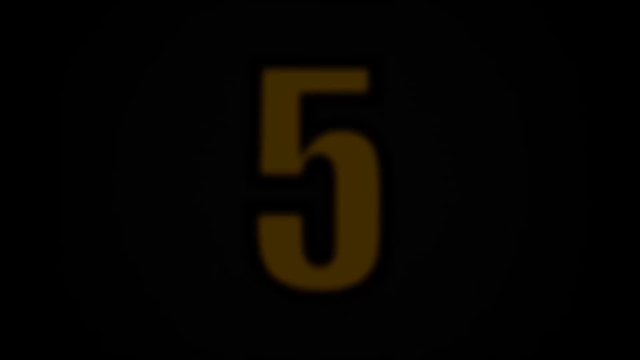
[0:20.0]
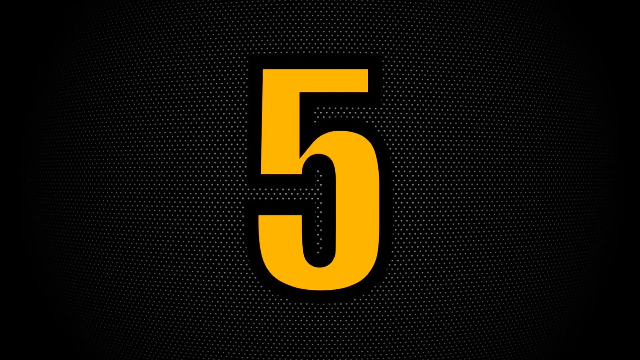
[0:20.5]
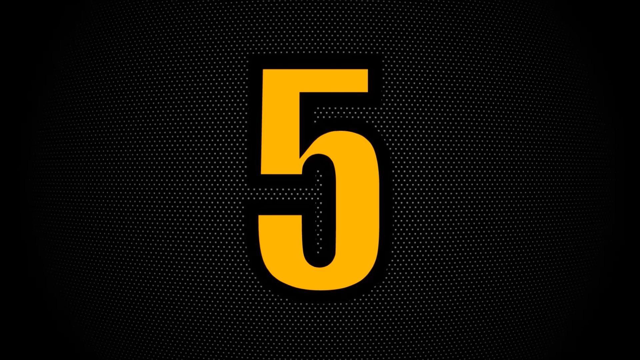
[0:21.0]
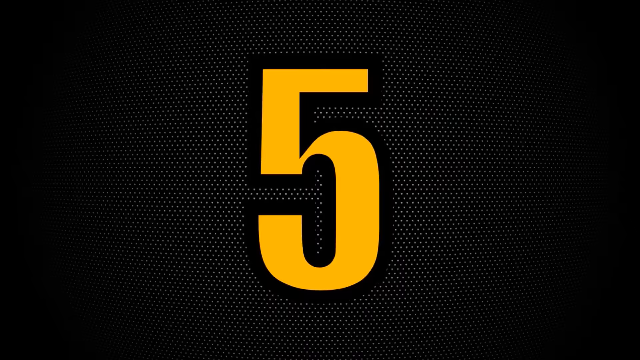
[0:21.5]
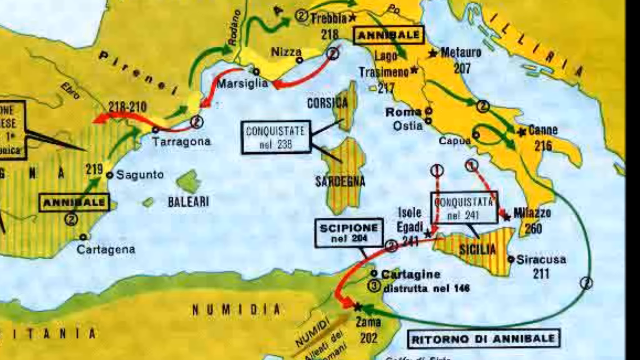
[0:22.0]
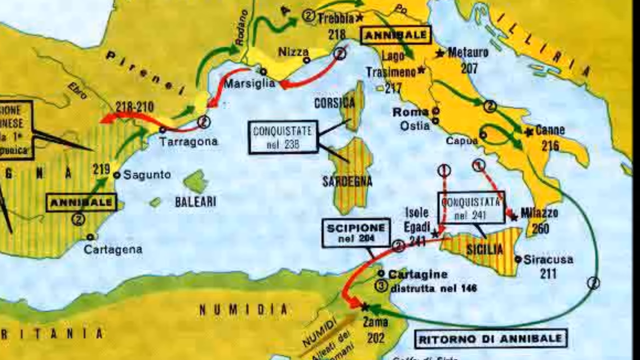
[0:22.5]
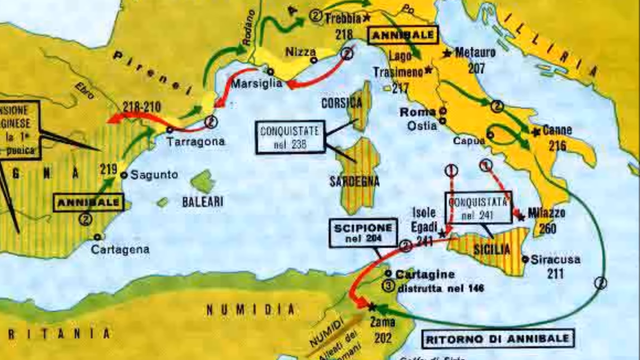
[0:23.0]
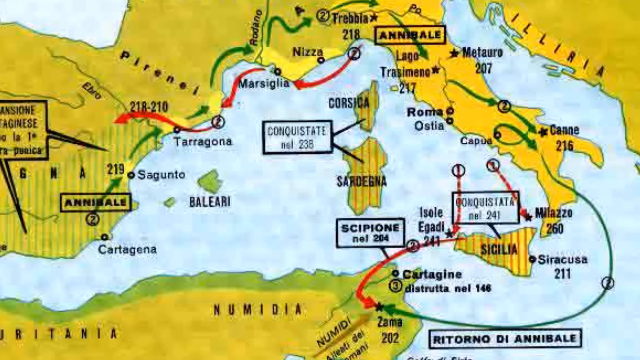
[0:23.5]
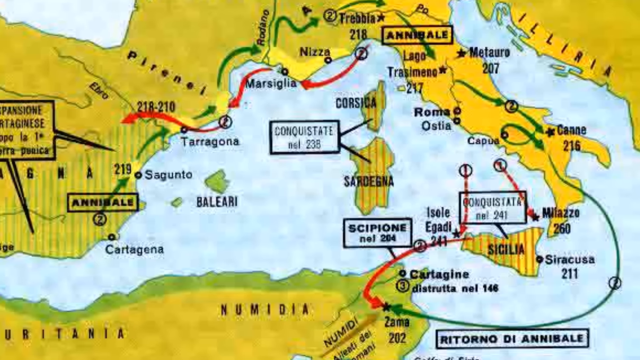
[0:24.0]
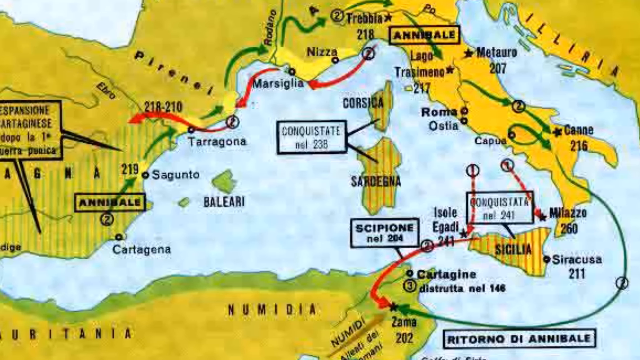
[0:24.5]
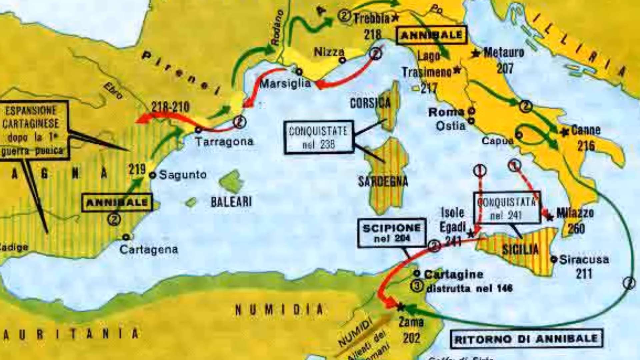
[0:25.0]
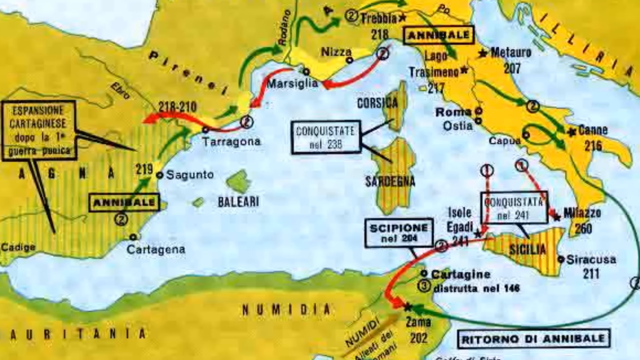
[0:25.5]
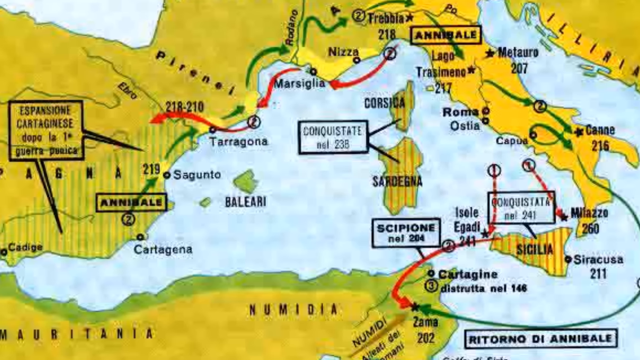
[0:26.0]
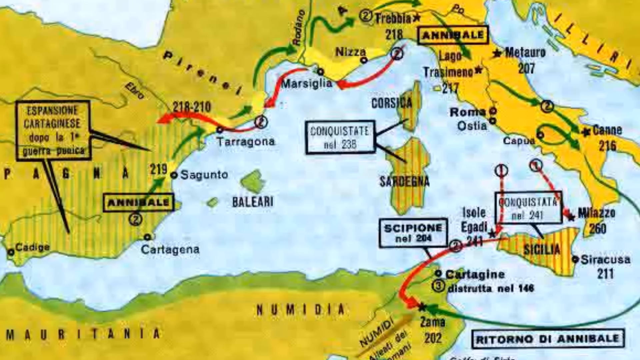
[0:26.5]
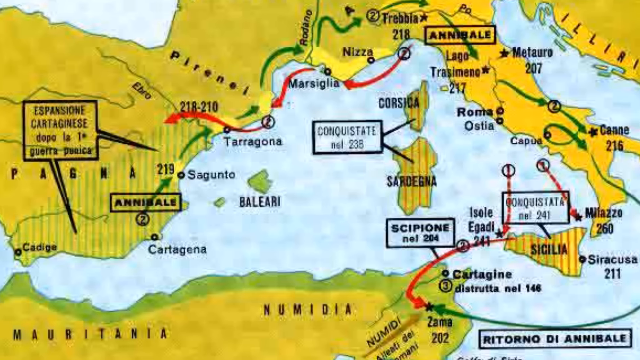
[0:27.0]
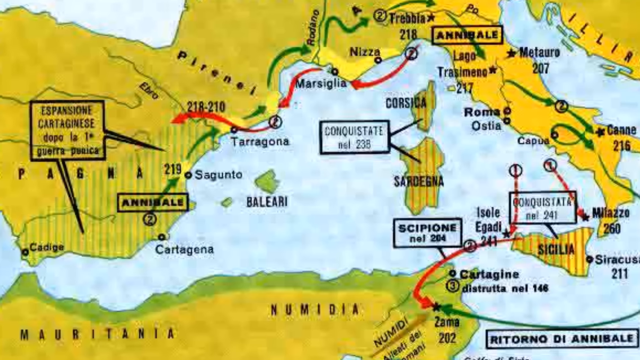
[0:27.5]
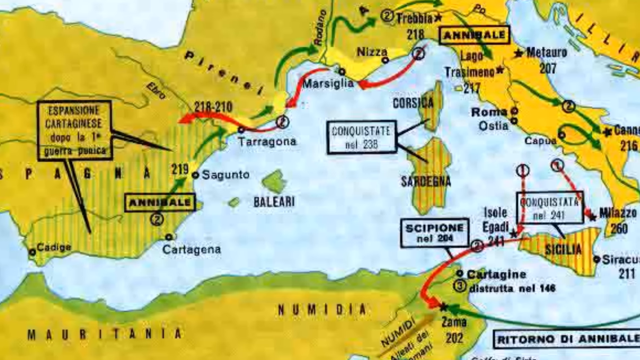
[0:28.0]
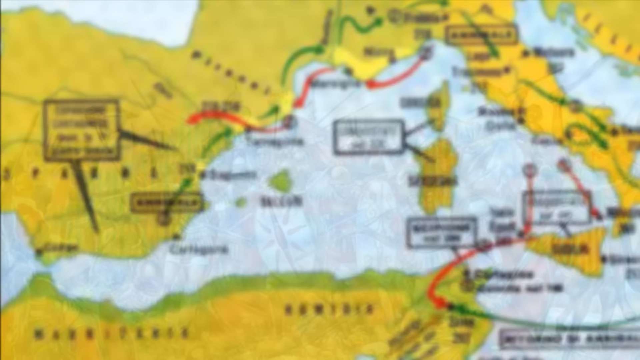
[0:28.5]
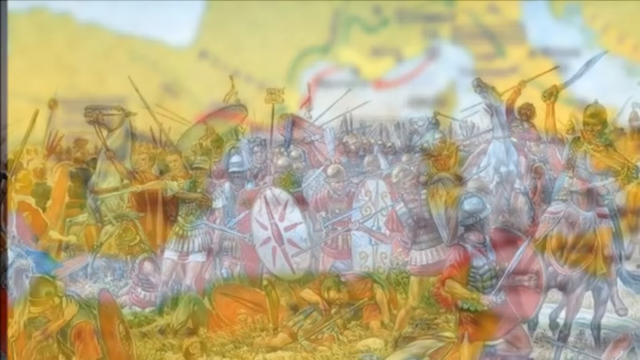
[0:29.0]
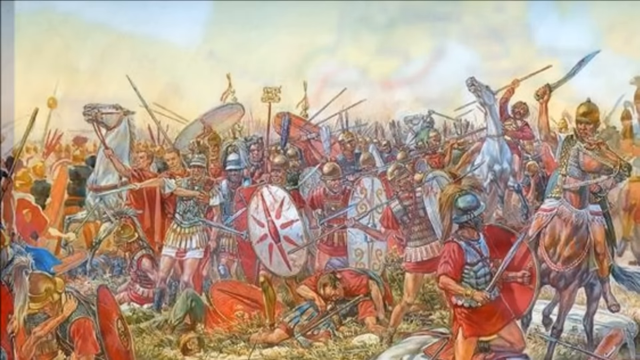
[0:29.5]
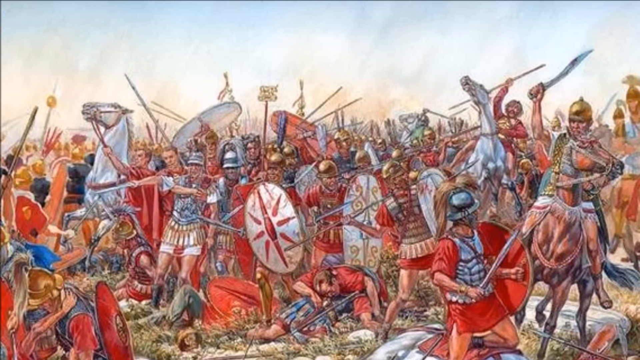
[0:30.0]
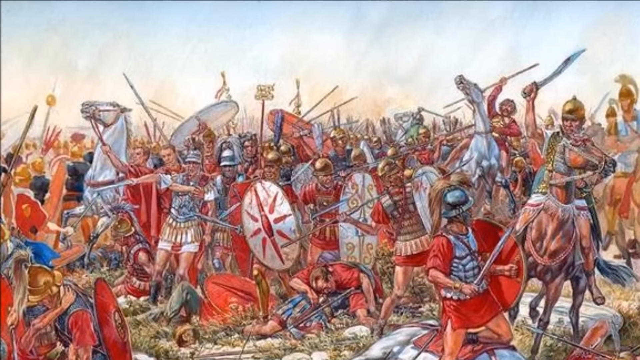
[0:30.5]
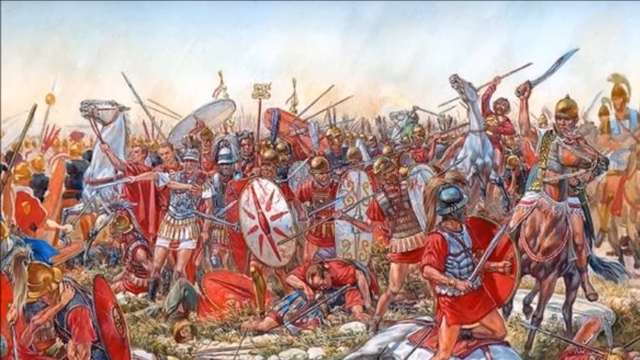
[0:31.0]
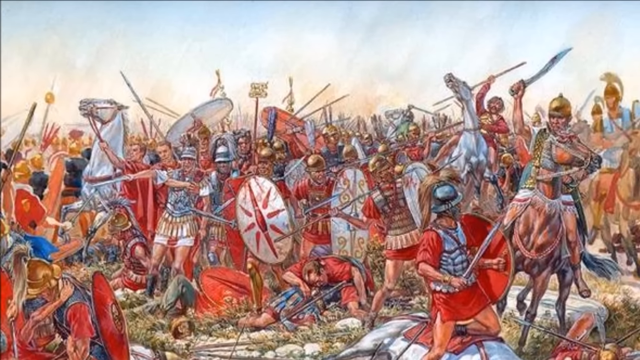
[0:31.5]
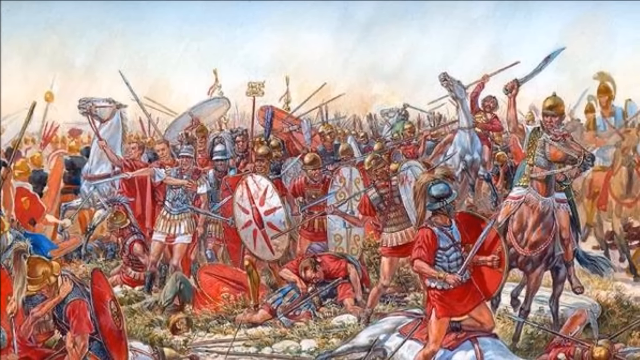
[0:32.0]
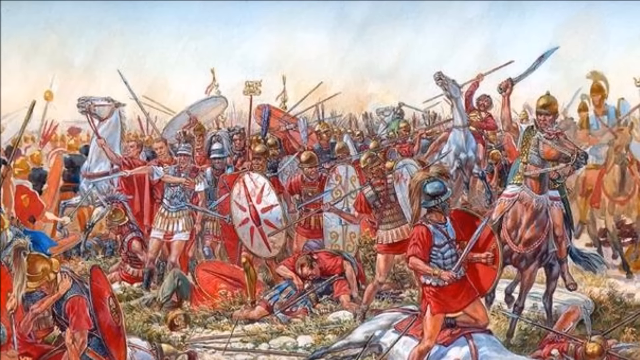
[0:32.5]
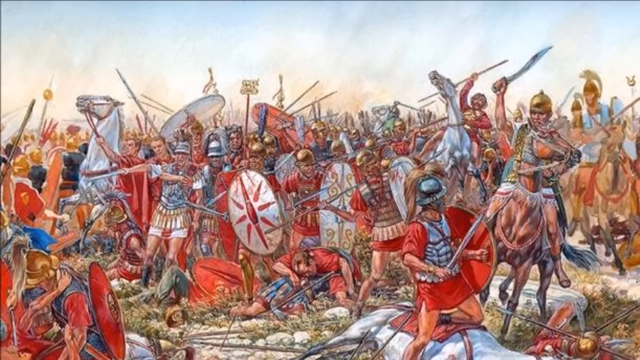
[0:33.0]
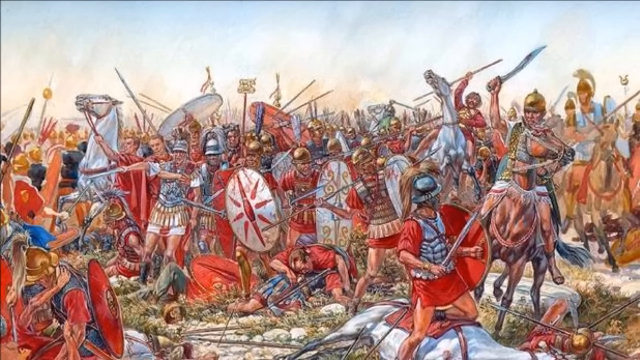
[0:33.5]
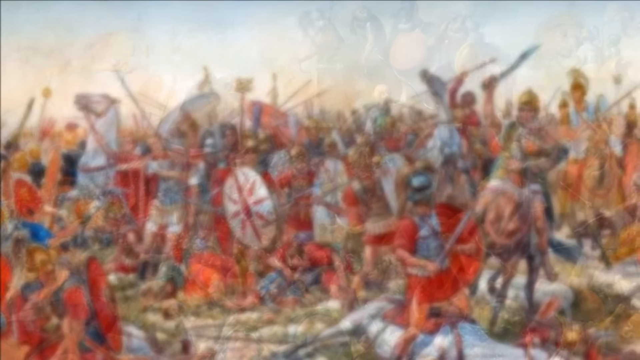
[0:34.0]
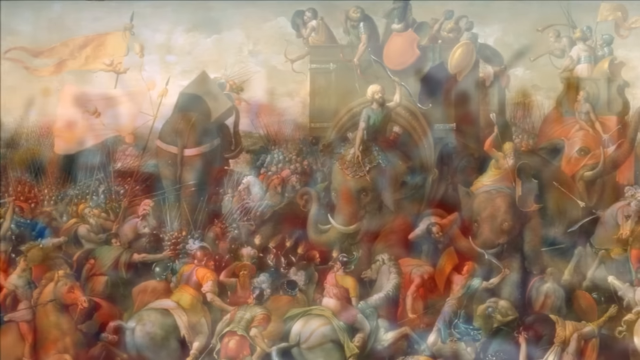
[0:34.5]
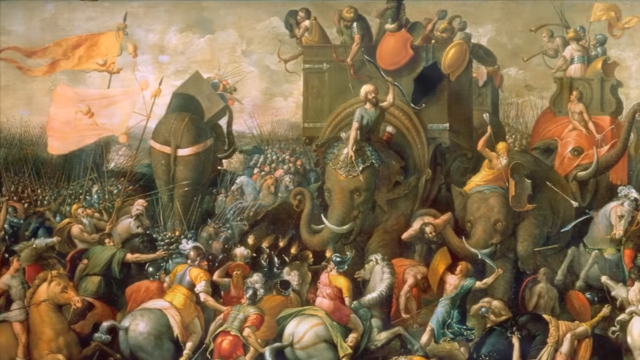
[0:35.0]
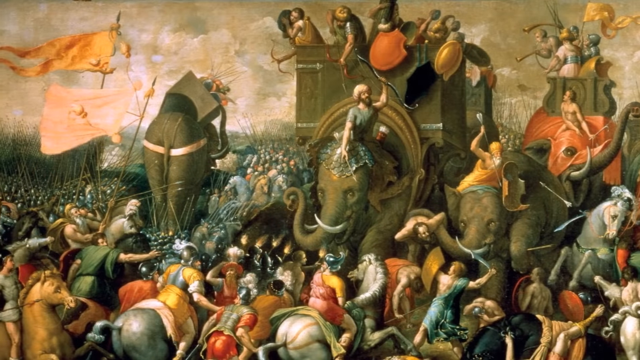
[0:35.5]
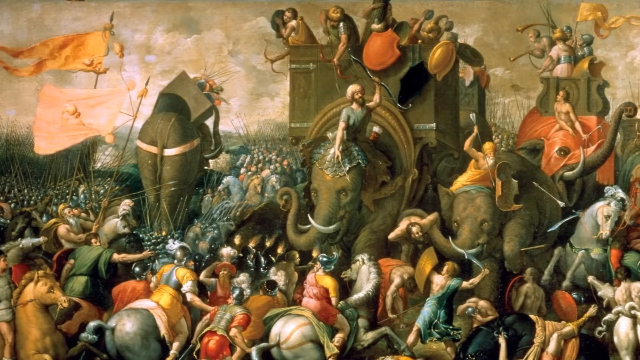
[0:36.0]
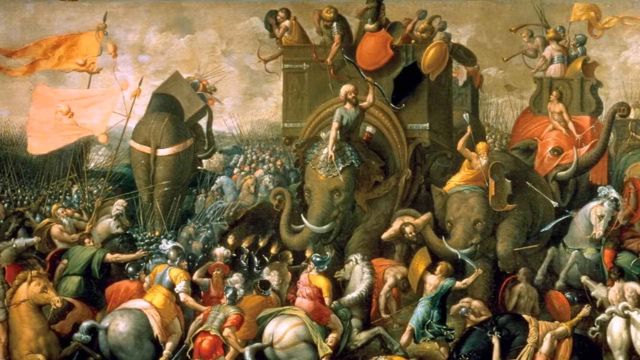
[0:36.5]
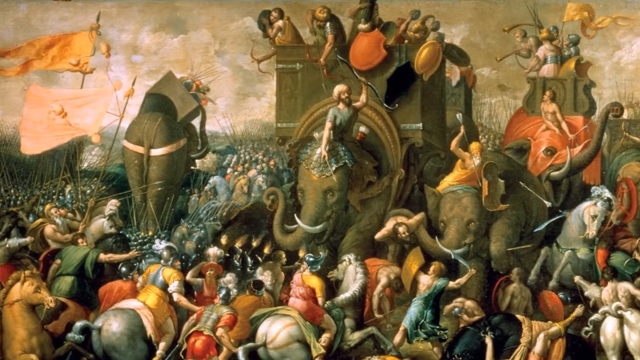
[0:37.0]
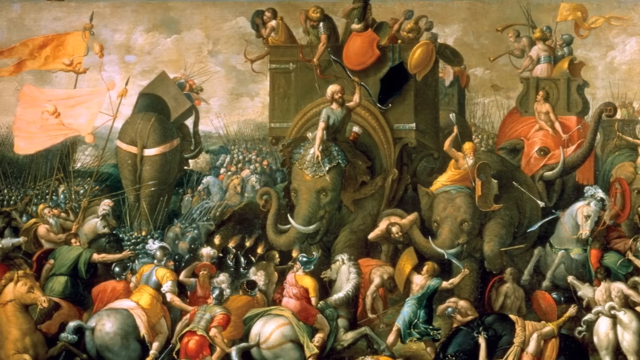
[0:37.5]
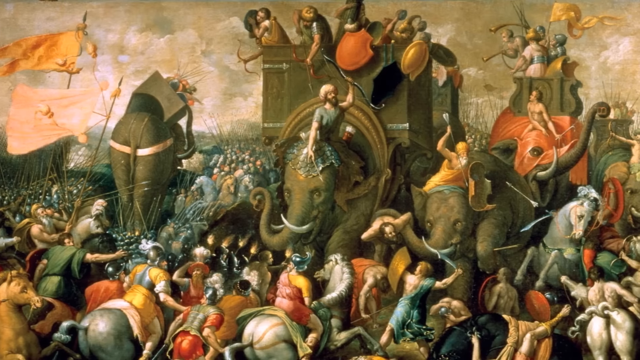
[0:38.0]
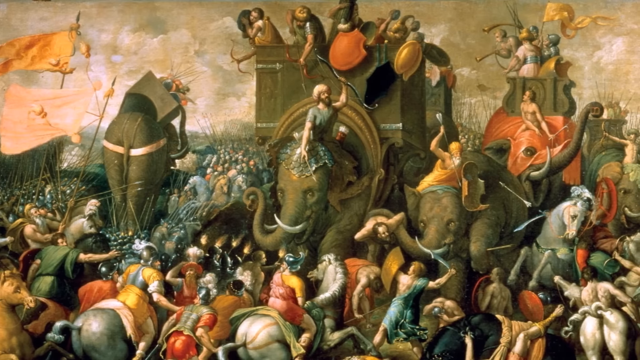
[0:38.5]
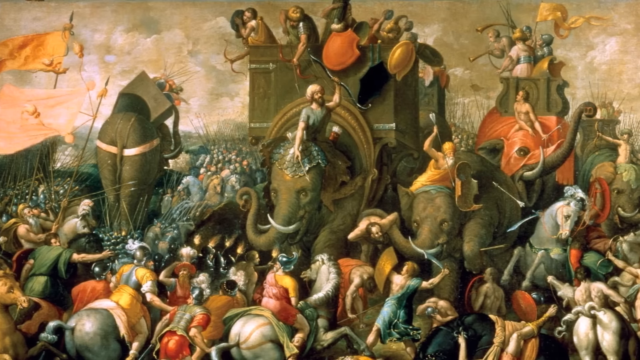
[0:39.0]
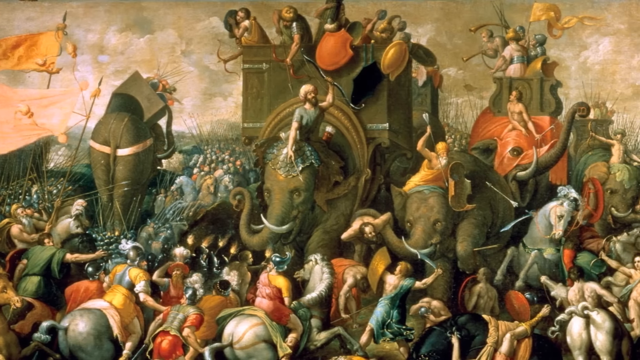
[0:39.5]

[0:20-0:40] Number 5 in the countdown is Hannibal's wars with the Romans. A map of the western Mediterranean shows a series of green arrows indicating Hannibal's advance from Carthage's territory in Spain, over the Pyrenees, and then across the river Rhone in southern France. The video then shows Roman infantry fighting Carthaginian cavalry, followed by an old painting of Hannibal's elephants.